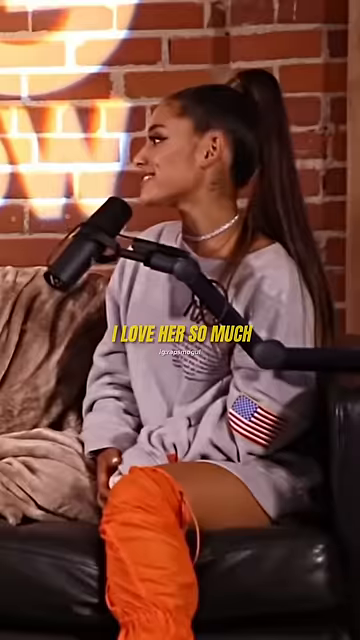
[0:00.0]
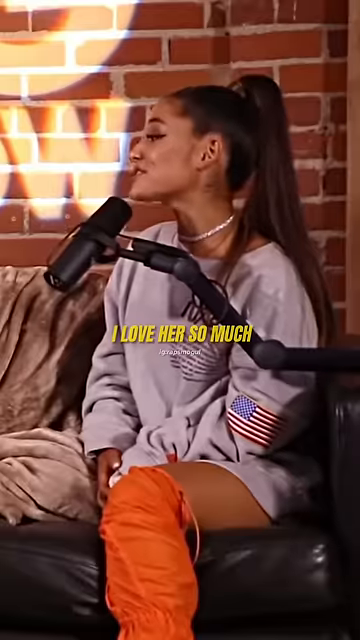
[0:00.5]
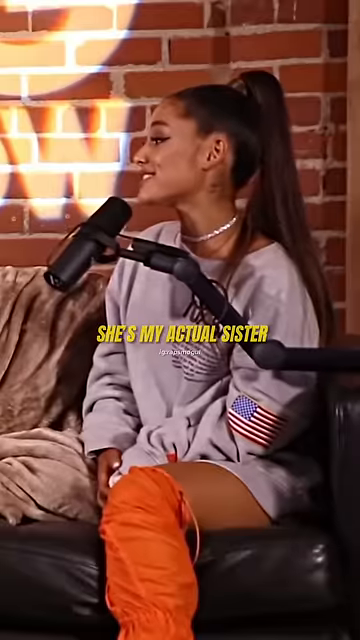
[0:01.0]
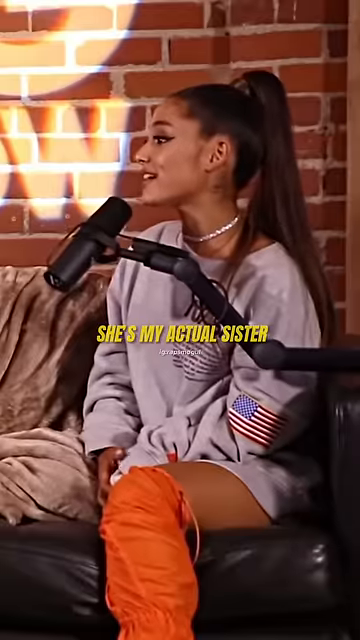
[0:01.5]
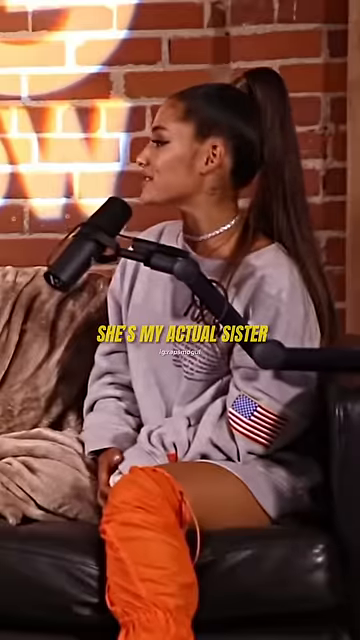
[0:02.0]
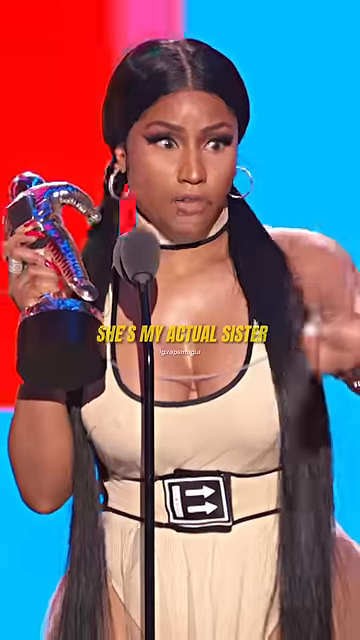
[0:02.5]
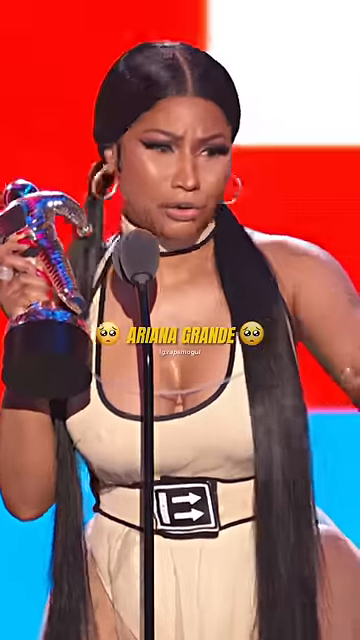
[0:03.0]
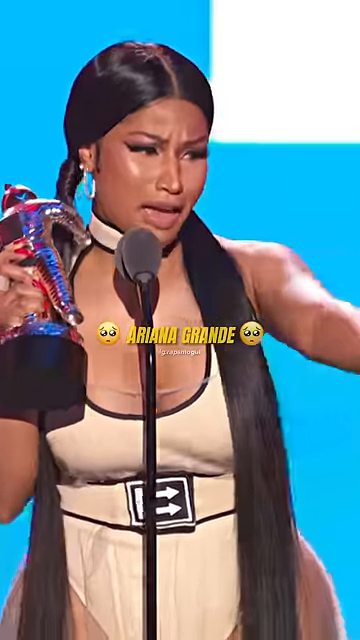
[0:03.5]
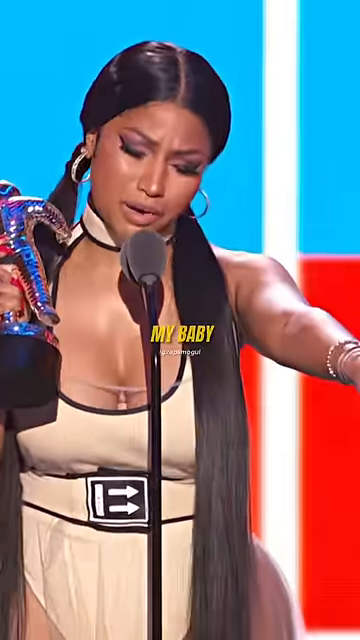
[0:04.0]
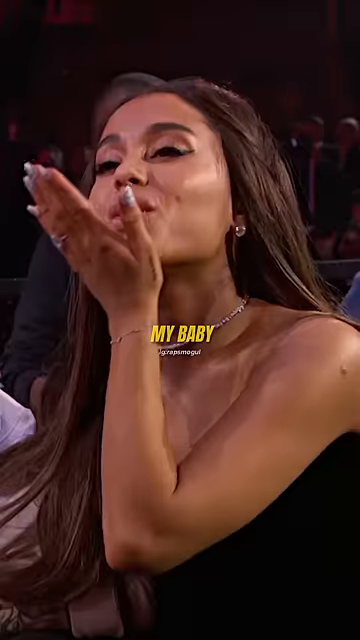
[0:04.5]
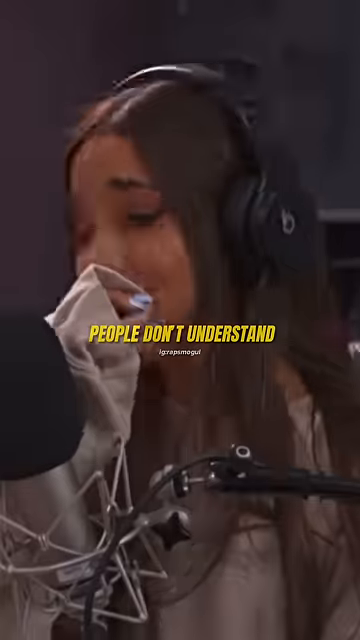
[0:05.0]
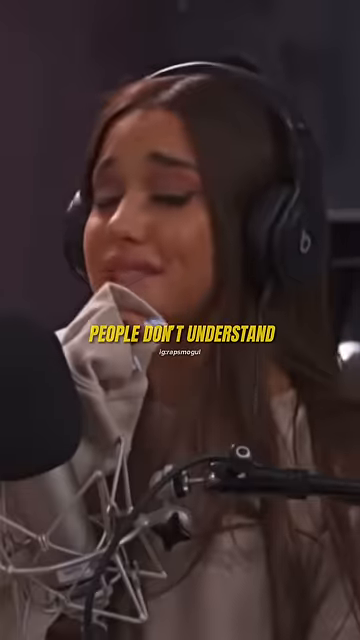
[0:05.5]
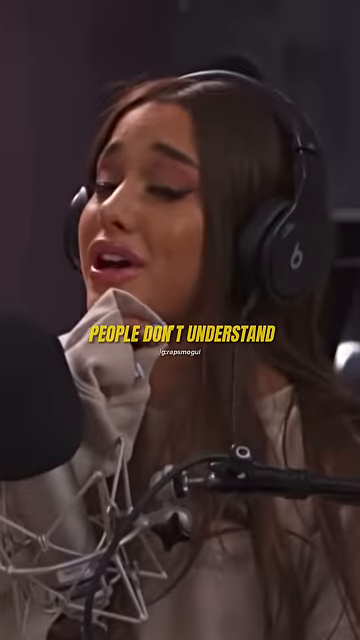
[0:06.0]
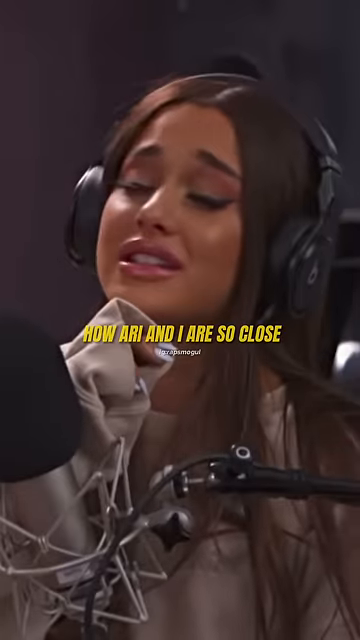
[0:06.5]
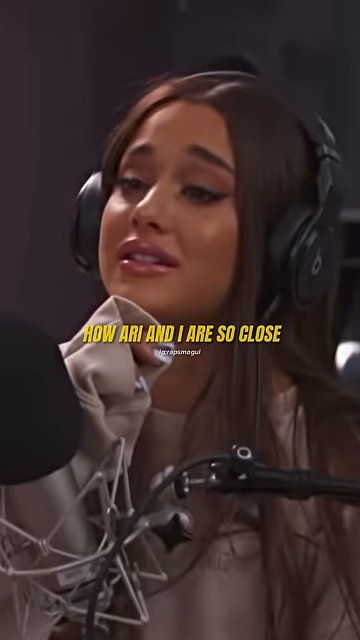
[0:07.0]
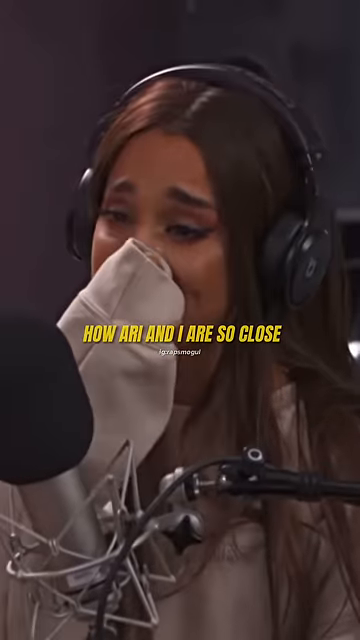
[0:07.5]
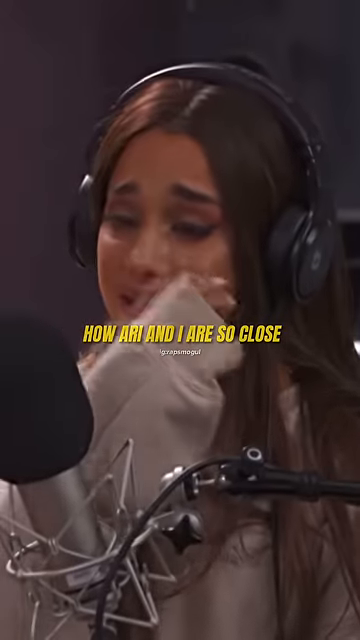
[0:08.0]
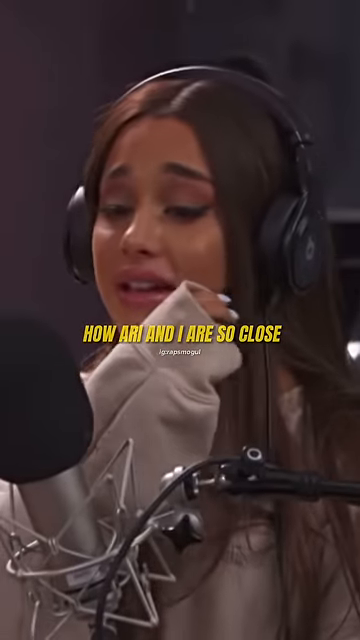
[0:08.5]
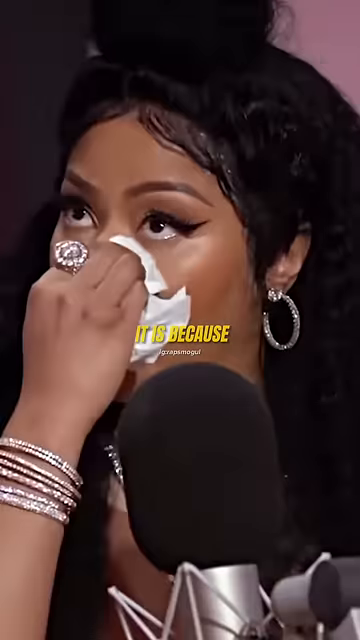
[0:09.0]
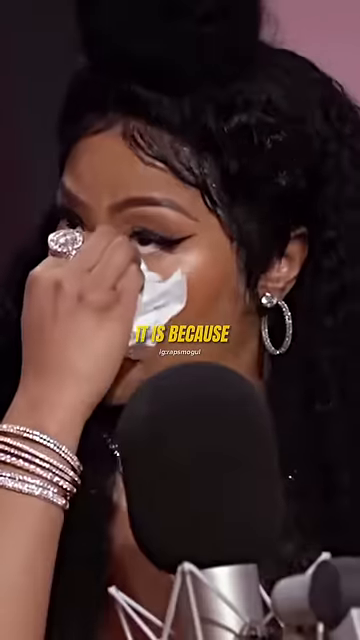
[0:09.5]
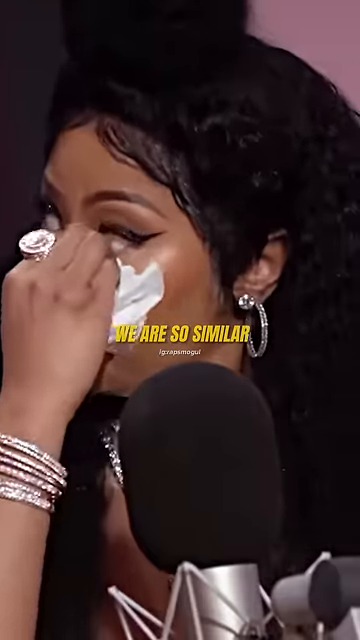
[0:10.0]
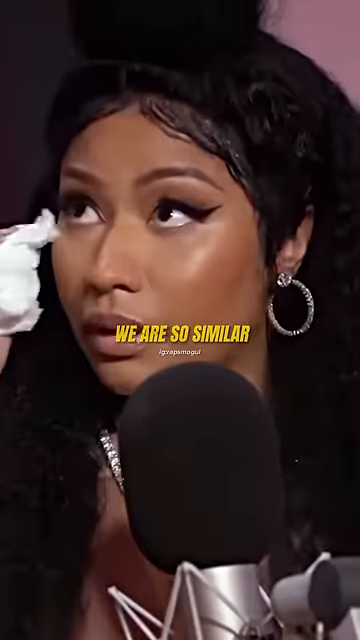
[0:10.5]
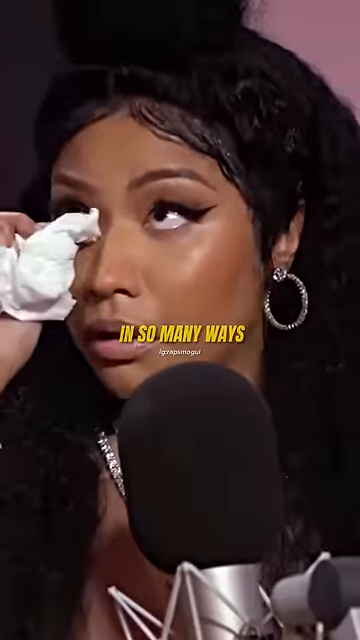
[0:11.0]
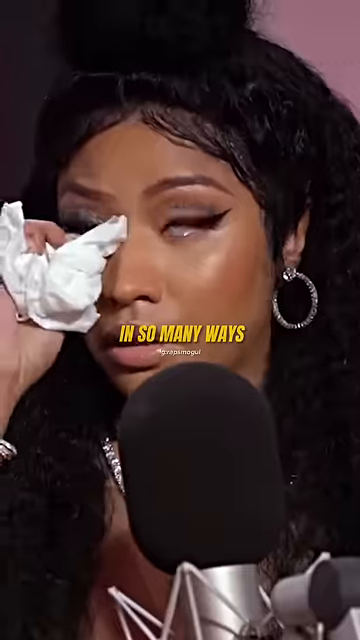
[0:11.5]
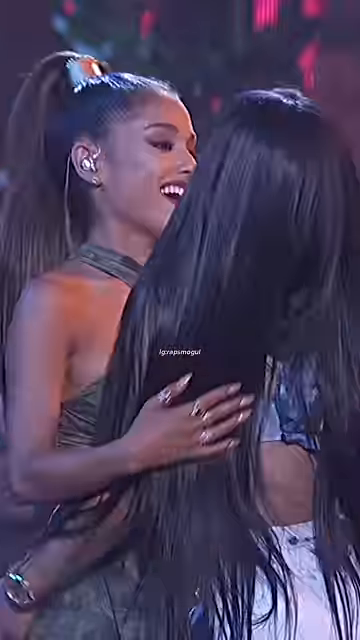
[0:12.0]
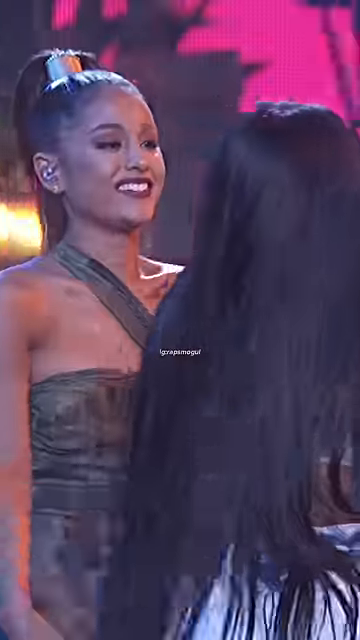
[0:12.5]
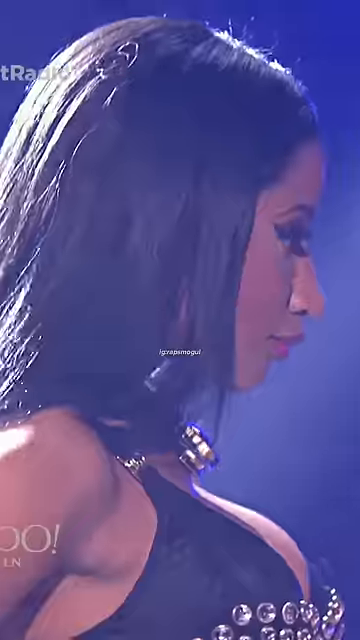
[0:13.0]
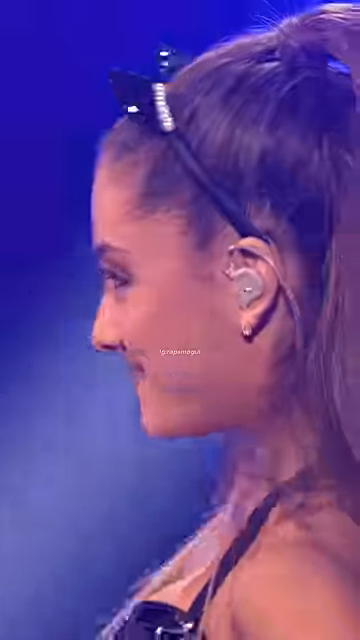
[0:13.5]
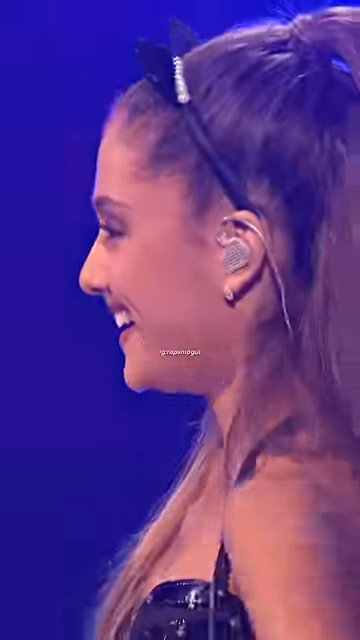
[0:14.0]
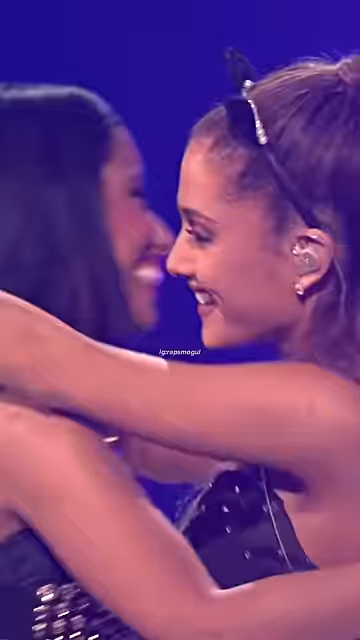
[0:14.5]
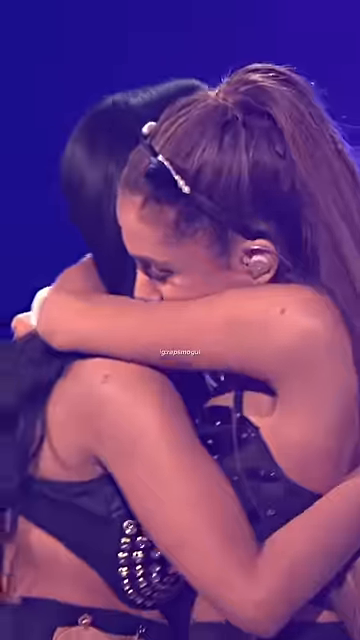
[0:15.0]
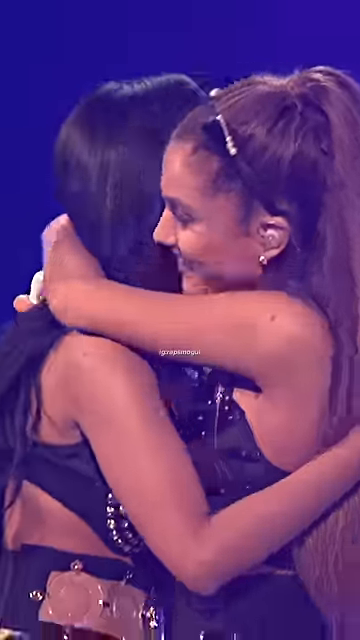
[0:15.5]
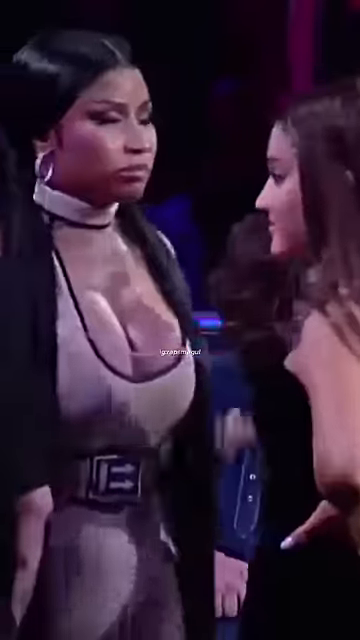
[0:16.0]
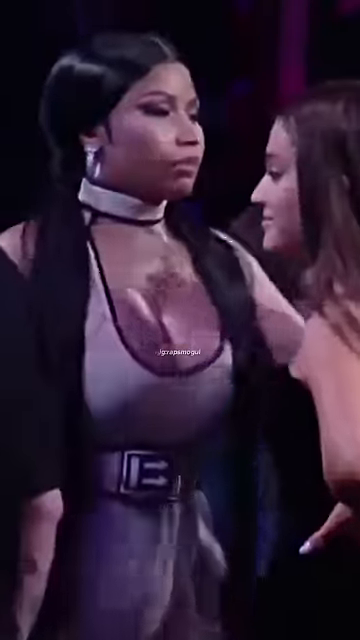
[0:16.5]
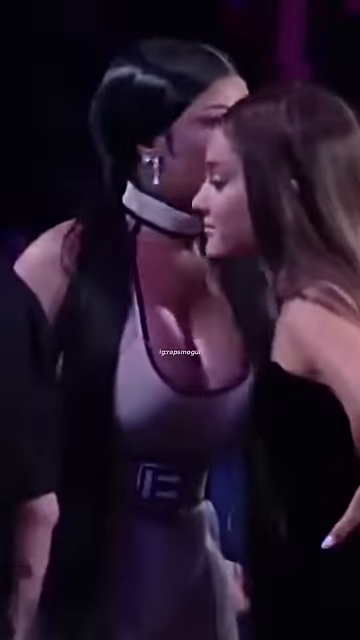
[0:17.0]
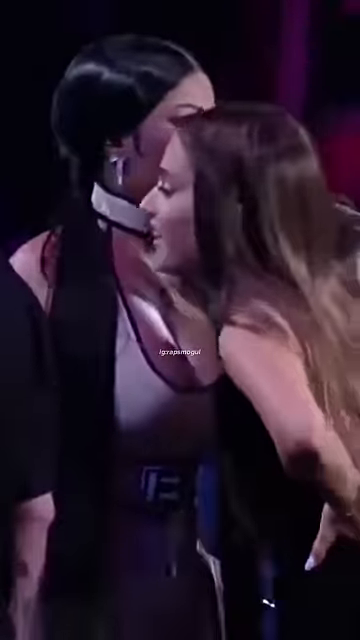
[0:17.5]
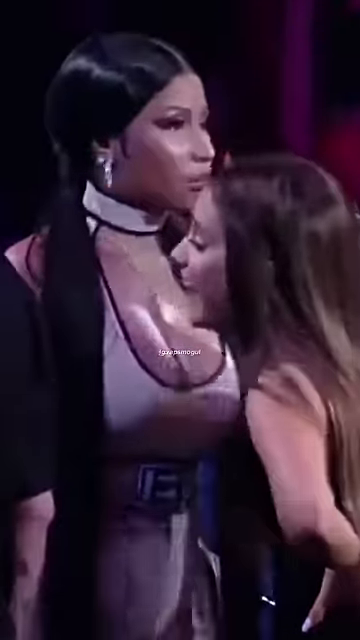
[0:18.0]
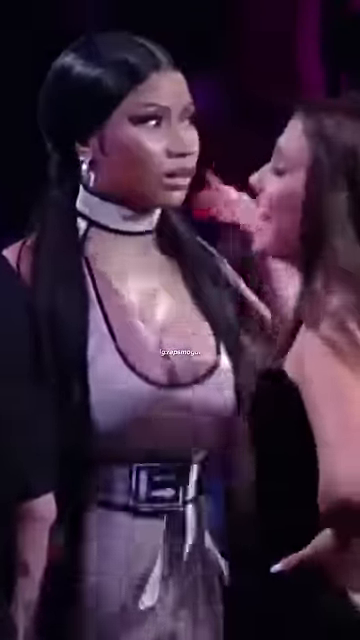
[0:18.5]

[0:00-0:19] A partial header at the top of the screen reads "Nicki Minaj and Ariana Grande's friend". Ariana Grande sits in front of a microphone being interviewed while a caption in the center of the screen reads "I Love her so much. She's my actual sister". The video switches to Nicki Minaj standing on a stage holding an award, with a caption in the middle reading "Ariana Grande", which then changes to "my baby" as she points to Ariana Grande in the audience; Ariana smiles and blows a kiss. It switches back to Ariana Grande sitting in a studio with headphones on, with the caption "people don't understand why she and I are so close." As the captions appear, she wipes away tears with the sleeve of the sweater she is wearing. Next, Nicki Minaj wipes away tears as a caption in the center of the screen reads "it's because", then "we are so similar", then "in so many ways." Finally, the two of them hug on stage in two separate scenes.